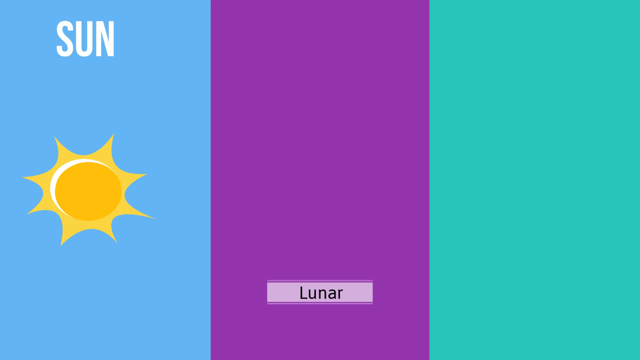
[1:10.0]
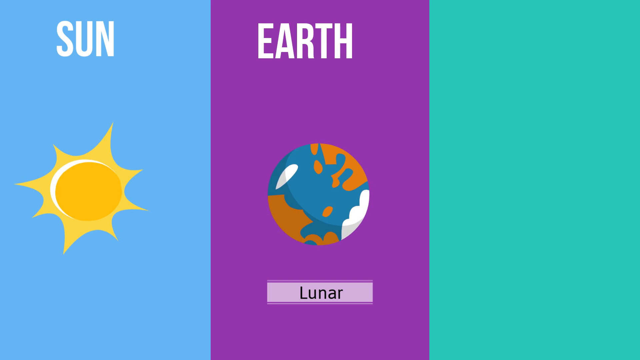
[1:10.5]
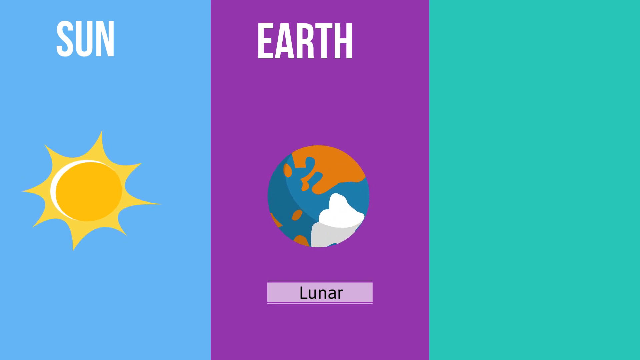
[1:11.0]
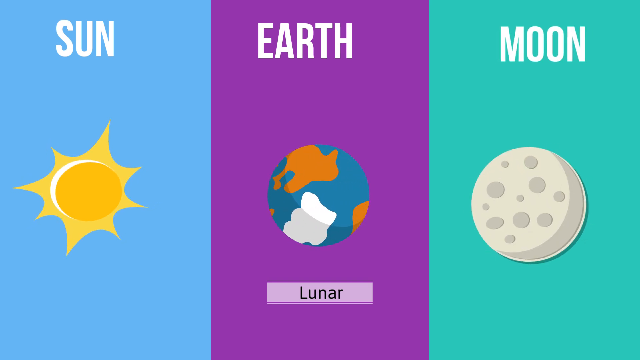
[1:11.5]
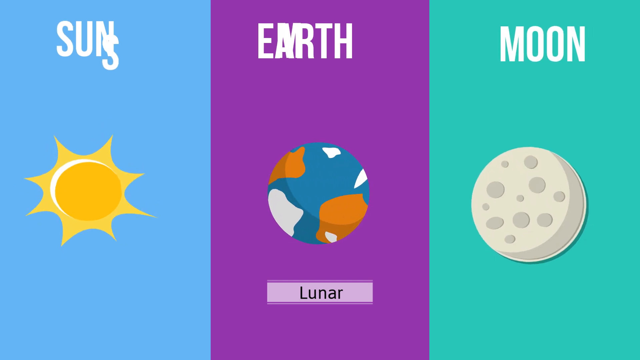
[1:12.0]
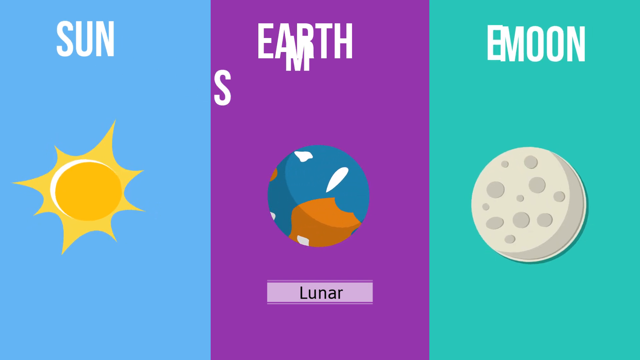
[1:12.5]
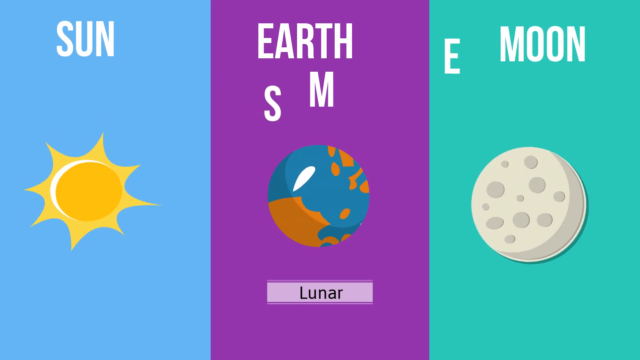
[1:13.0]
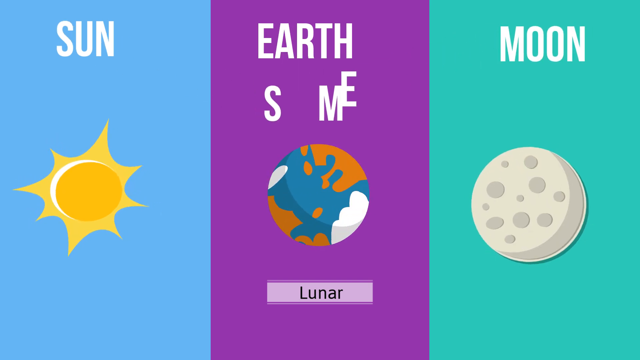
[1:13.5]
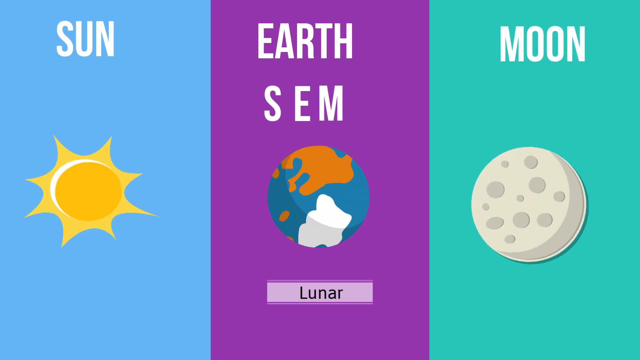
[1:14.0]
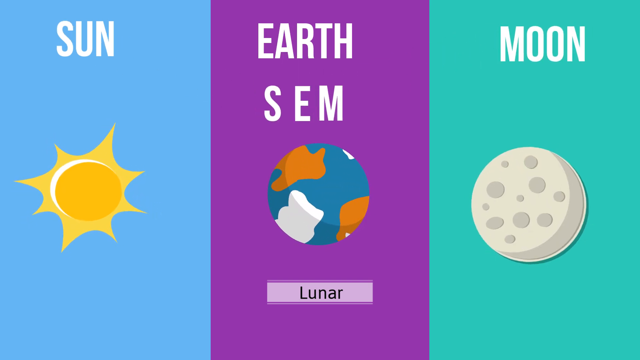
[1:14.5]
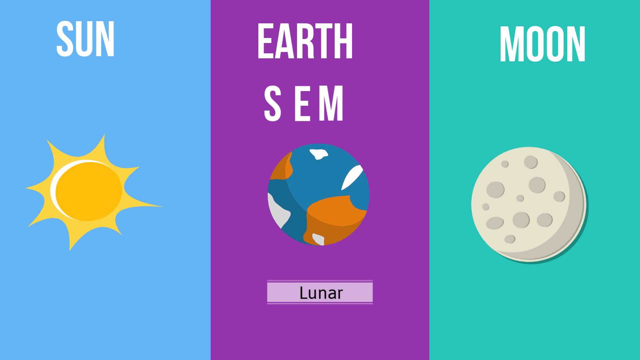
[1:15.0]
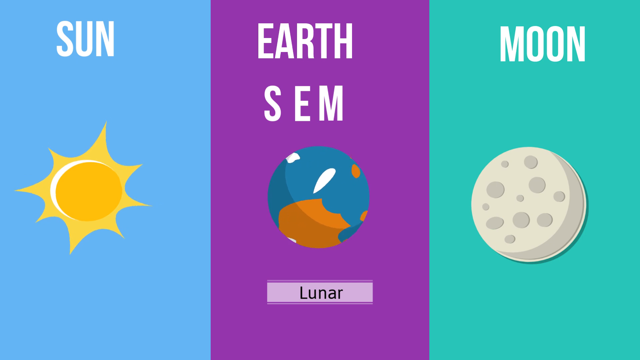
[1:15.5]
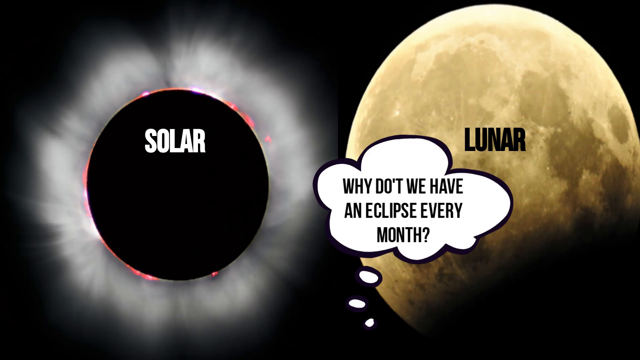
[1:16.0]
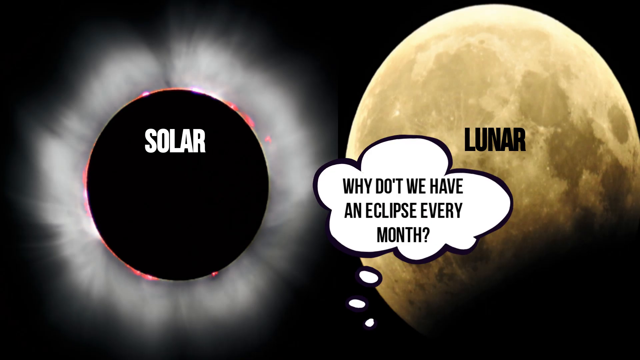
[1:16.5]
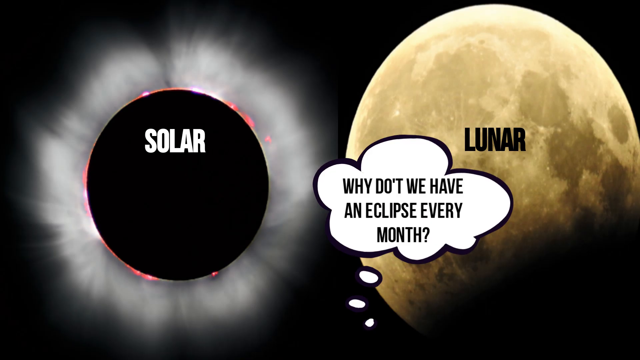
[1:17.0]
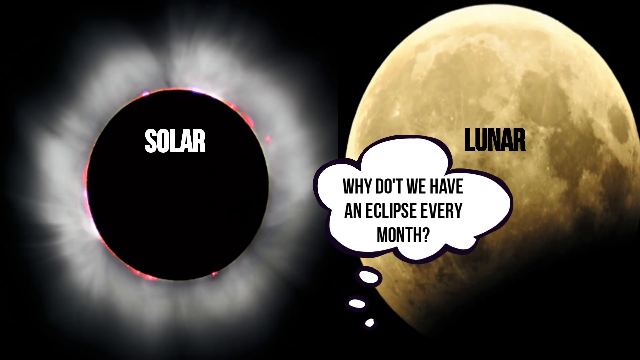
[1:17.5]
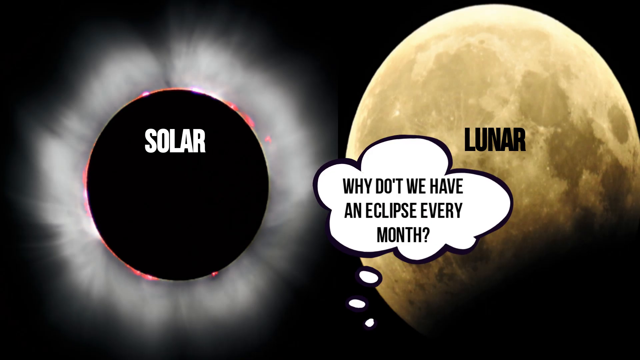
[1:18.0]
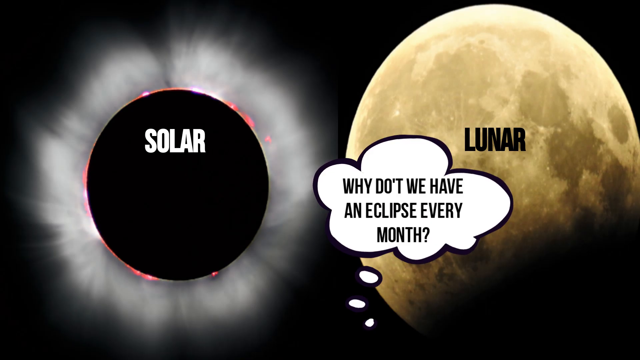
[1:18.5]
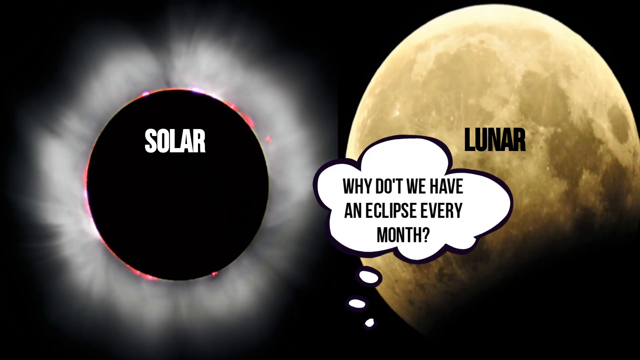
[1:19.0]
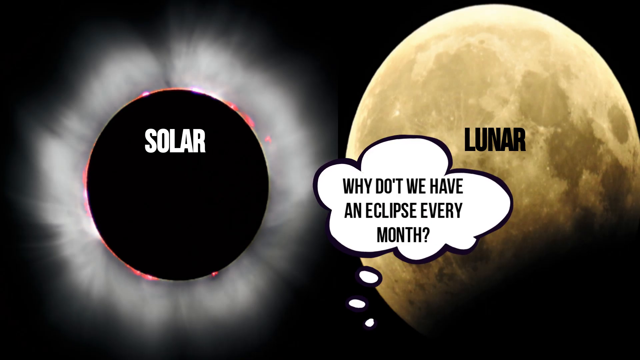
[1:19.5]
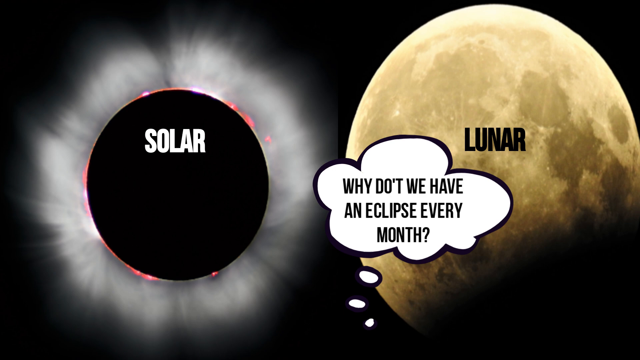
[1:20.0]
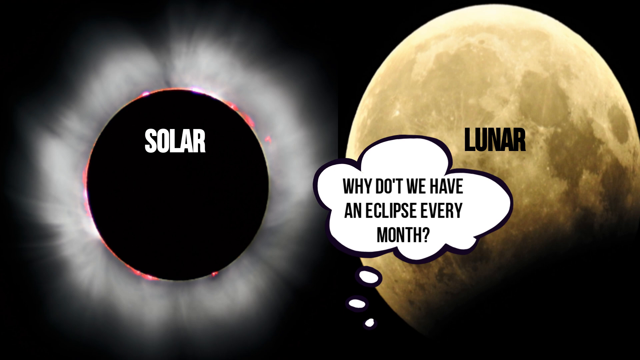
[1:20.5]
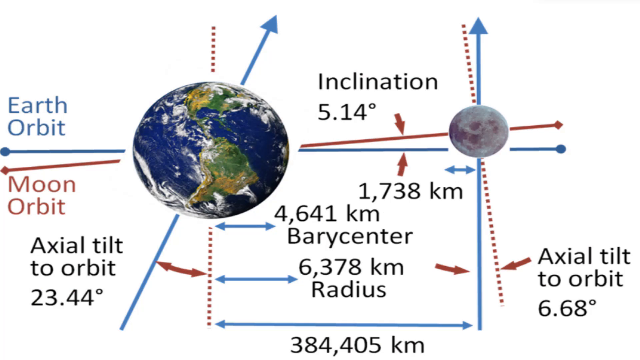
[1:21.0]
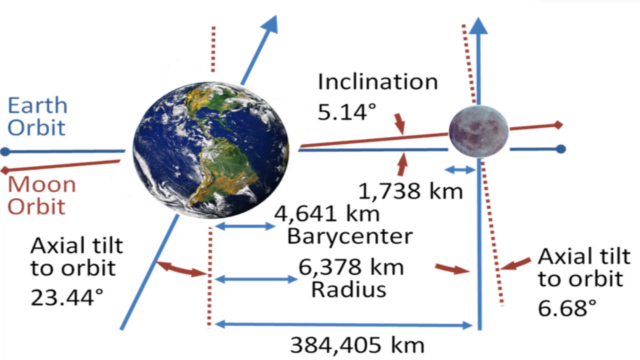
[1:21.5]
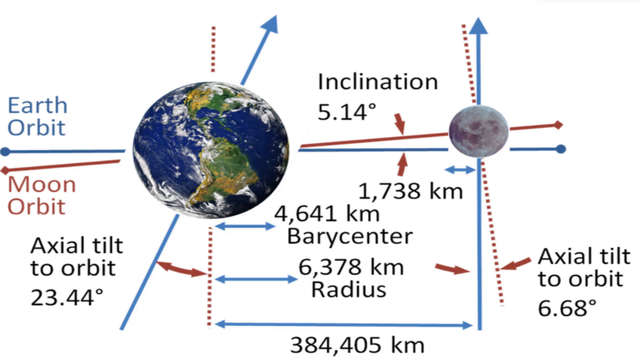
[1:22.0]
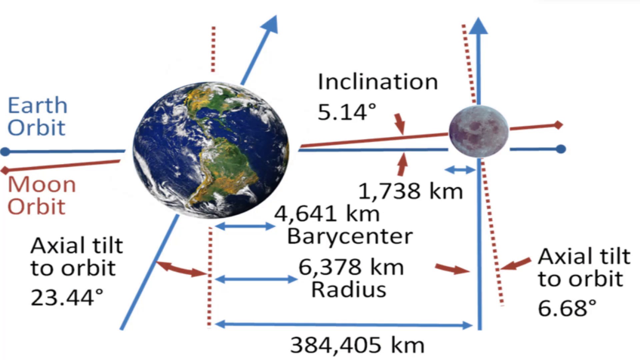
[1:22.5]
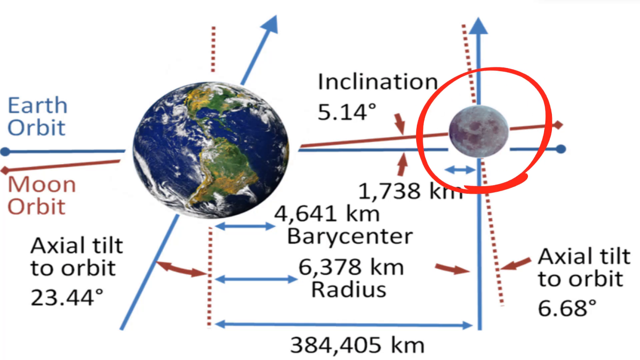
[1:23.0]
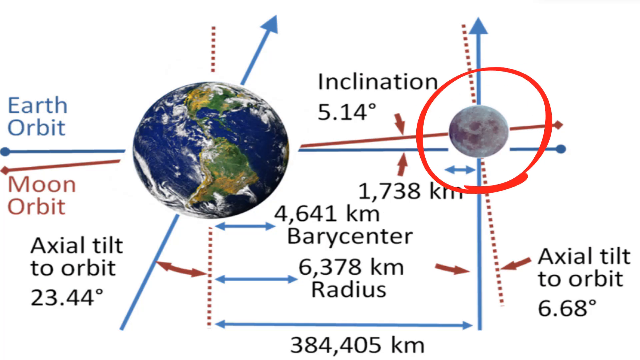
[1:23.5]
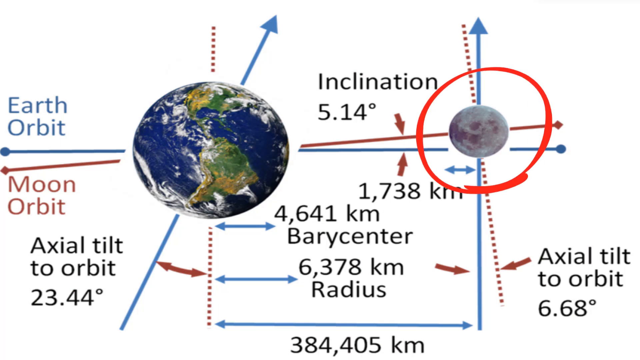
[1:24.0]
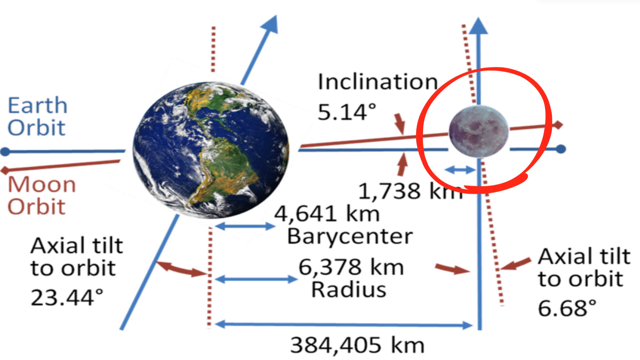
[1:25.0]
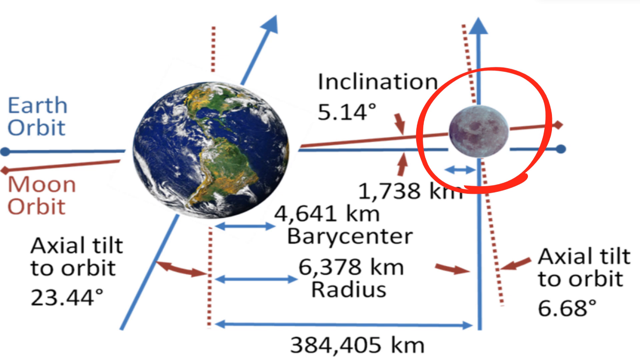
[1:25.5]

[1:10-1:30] A cartoon rendition shows the sun on the far left, the Earth in the center, and the moon on the far right, with the letters "S-E-M" right over the Earth. The view then changes to a computer-generated model with the sun blotted out in black, the word "solar," and a moon on the right. The question "why don't we have an eclipse every month" appears. Next there is a picture of the Earth and a picture of the moon with blue and red arrows, and labels including Earth orbit, Moon orbit, inclination, barycenter, radius and axial tilt to orbit, each with numbers underneath.